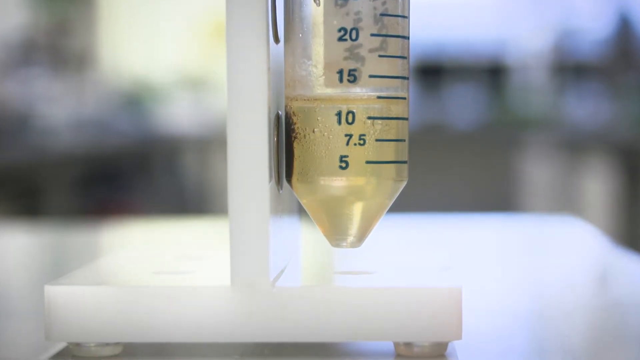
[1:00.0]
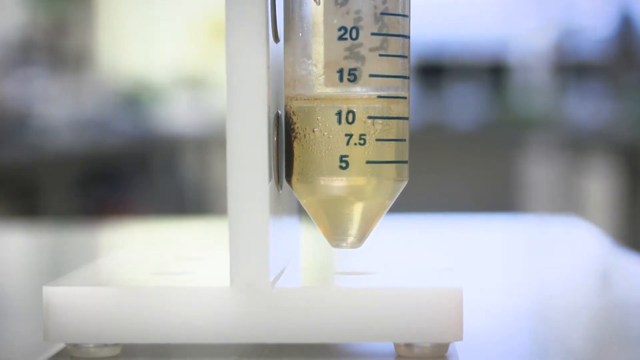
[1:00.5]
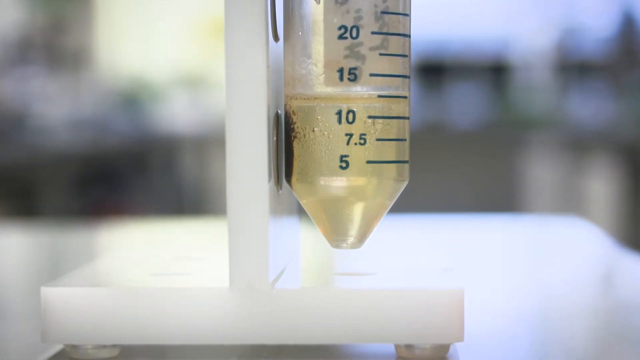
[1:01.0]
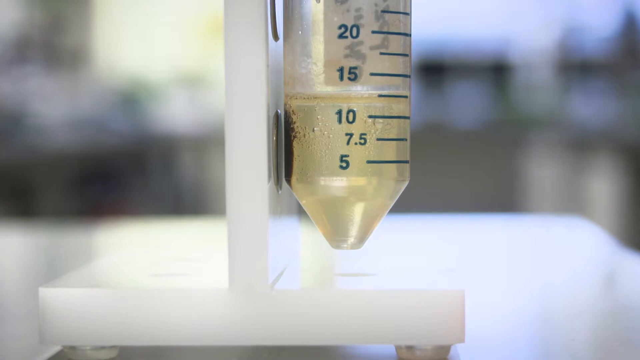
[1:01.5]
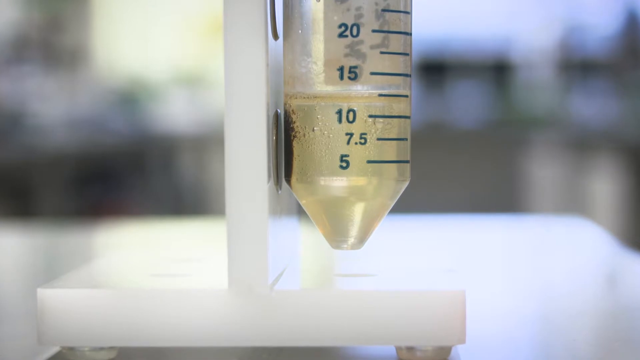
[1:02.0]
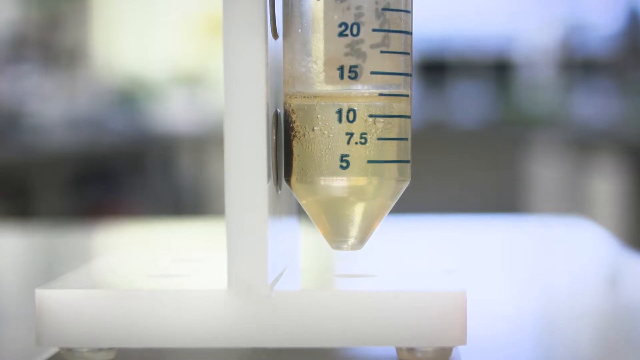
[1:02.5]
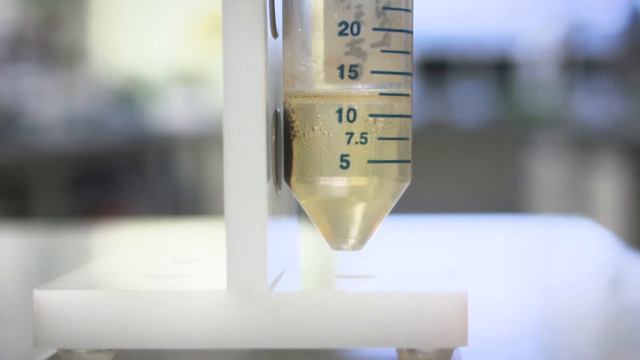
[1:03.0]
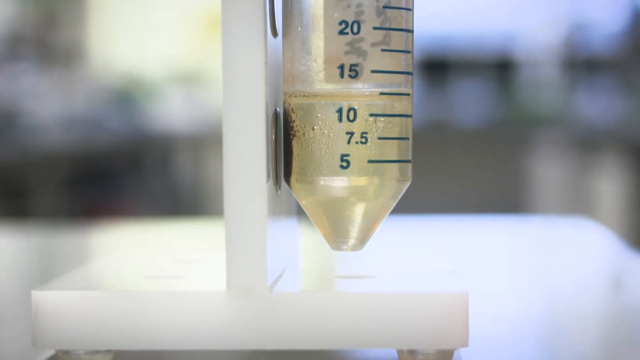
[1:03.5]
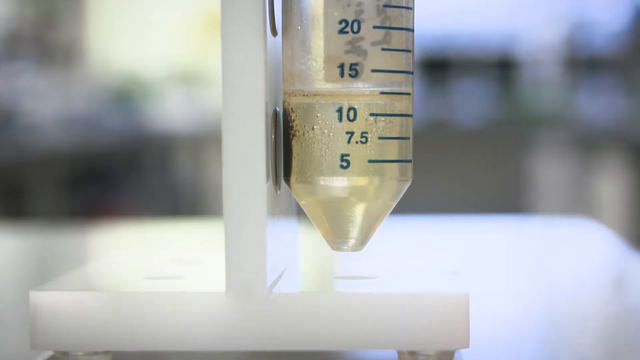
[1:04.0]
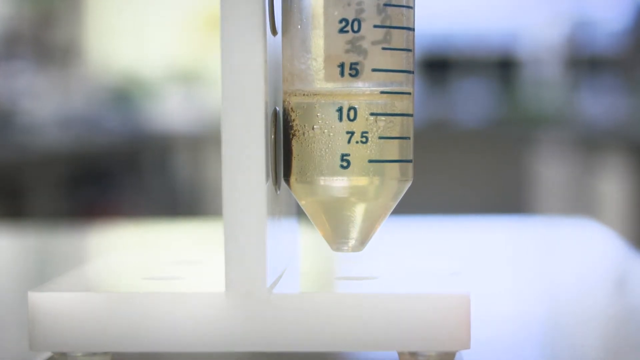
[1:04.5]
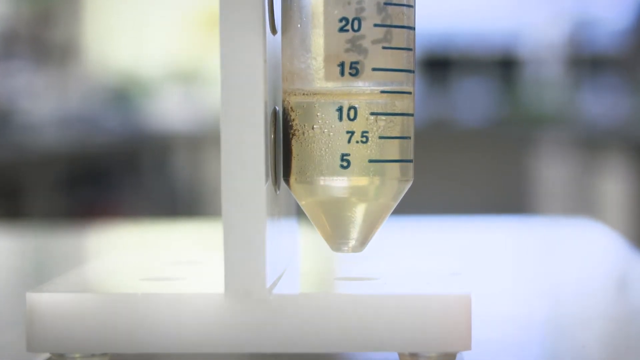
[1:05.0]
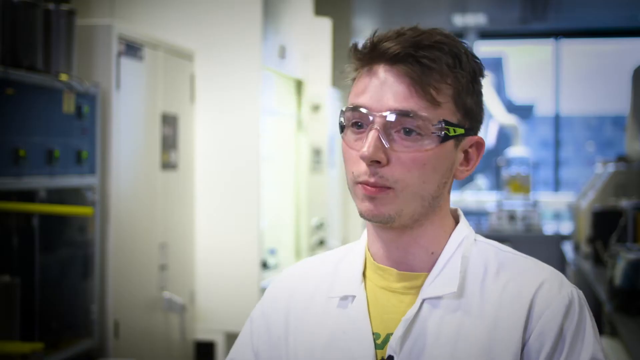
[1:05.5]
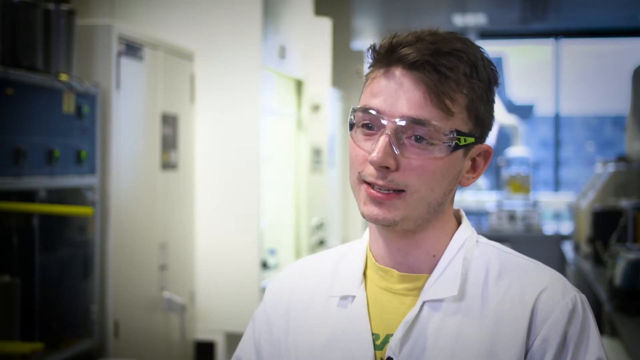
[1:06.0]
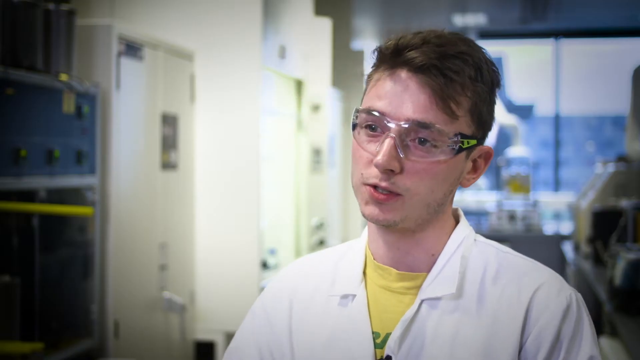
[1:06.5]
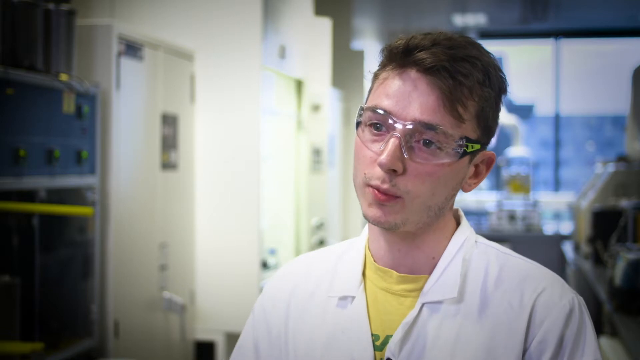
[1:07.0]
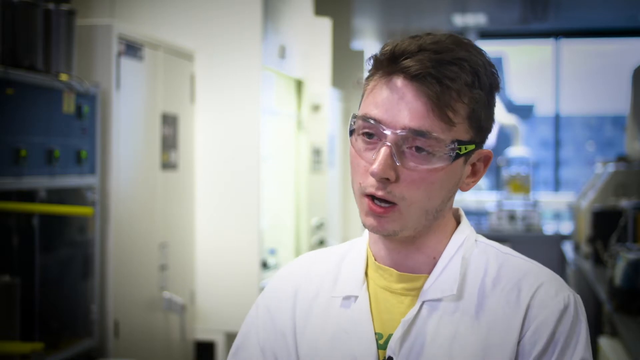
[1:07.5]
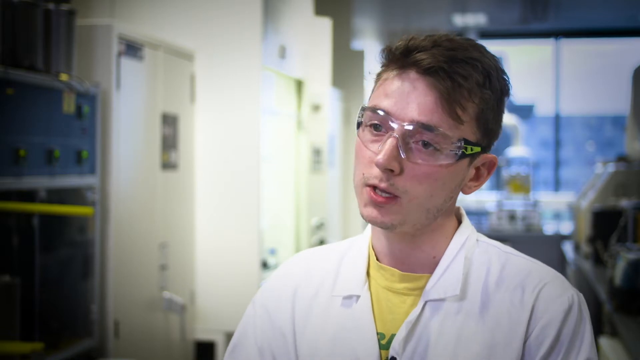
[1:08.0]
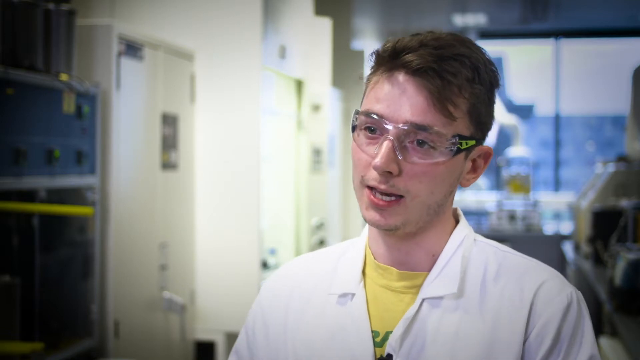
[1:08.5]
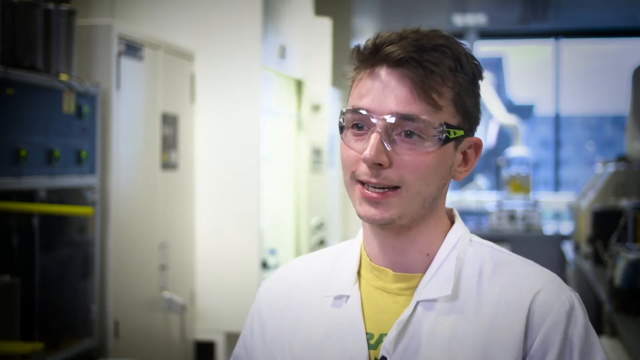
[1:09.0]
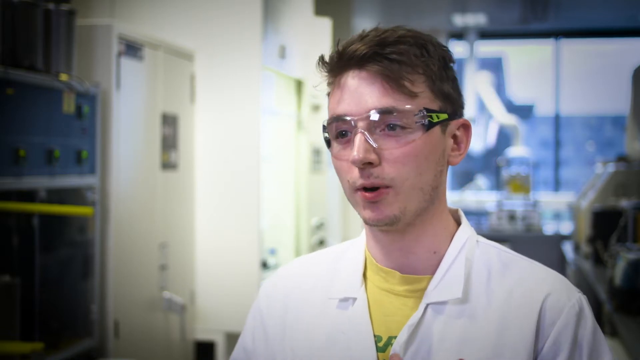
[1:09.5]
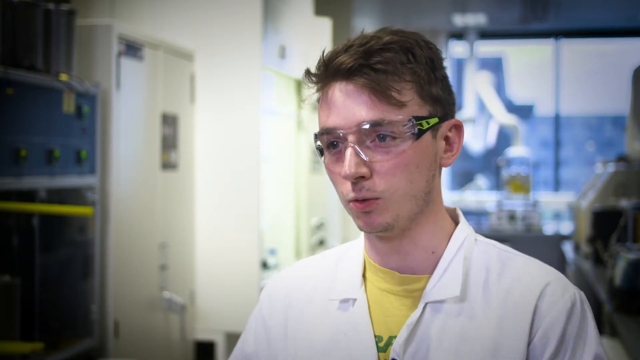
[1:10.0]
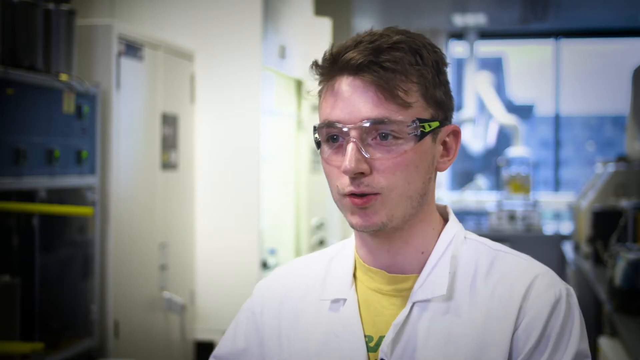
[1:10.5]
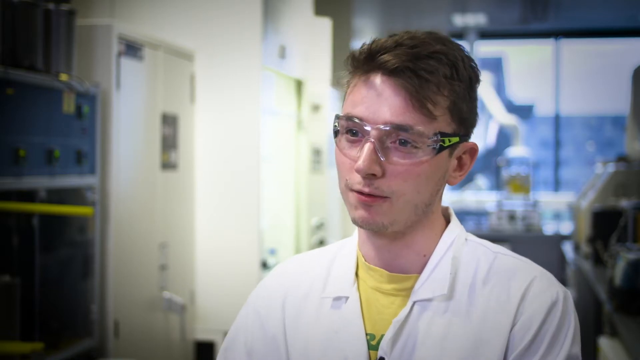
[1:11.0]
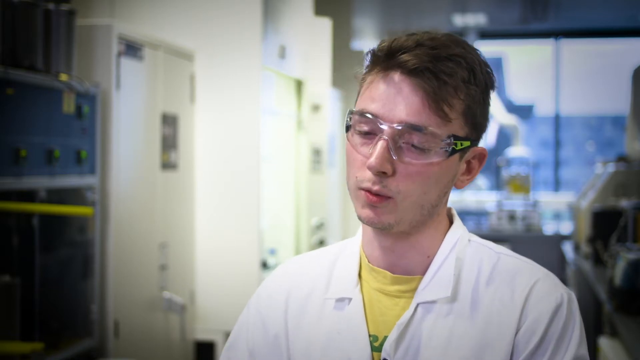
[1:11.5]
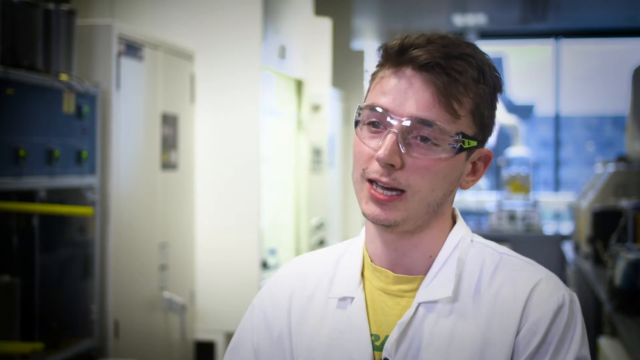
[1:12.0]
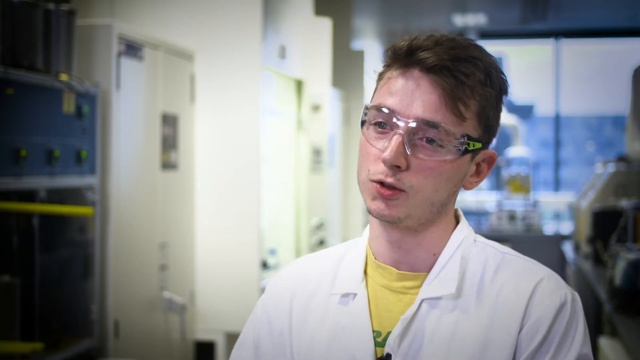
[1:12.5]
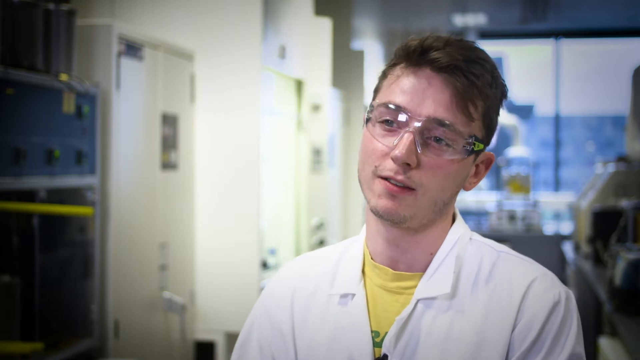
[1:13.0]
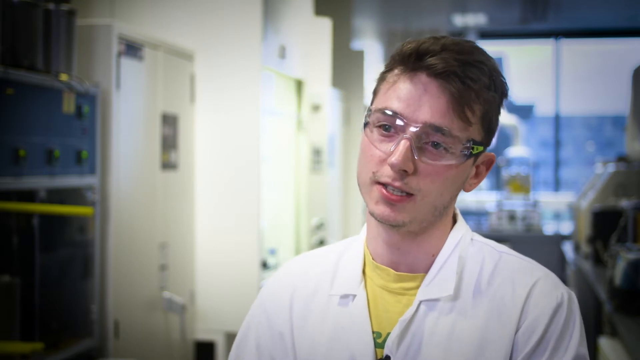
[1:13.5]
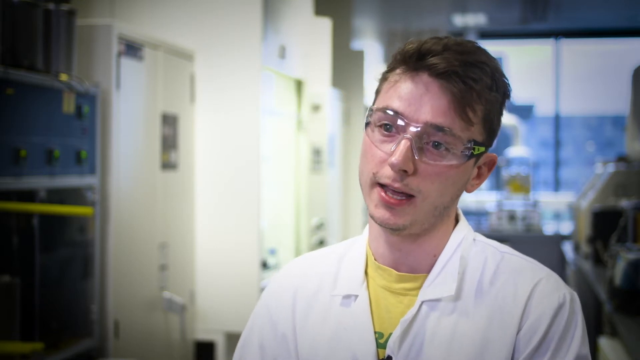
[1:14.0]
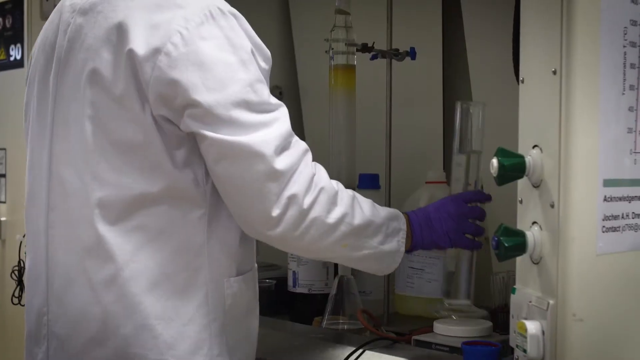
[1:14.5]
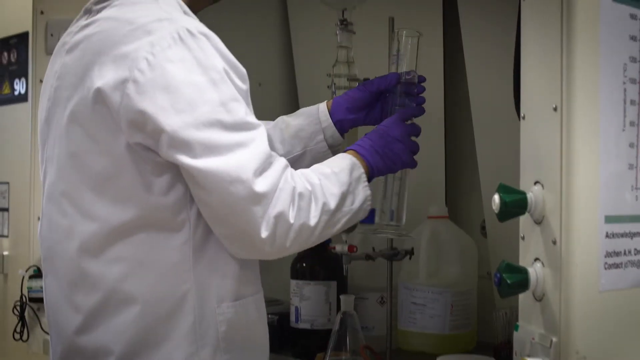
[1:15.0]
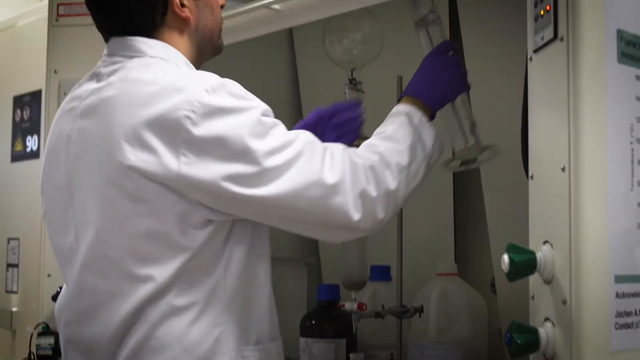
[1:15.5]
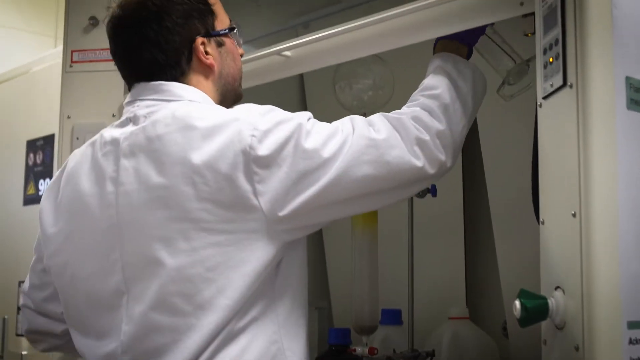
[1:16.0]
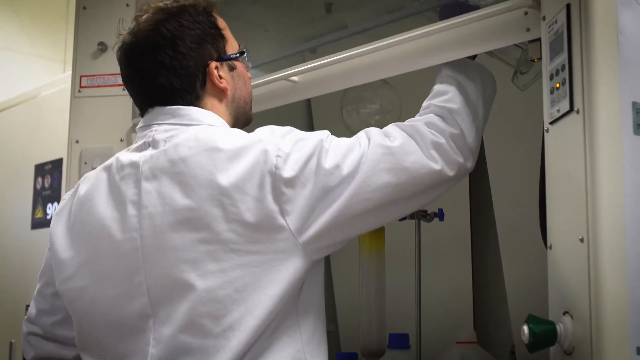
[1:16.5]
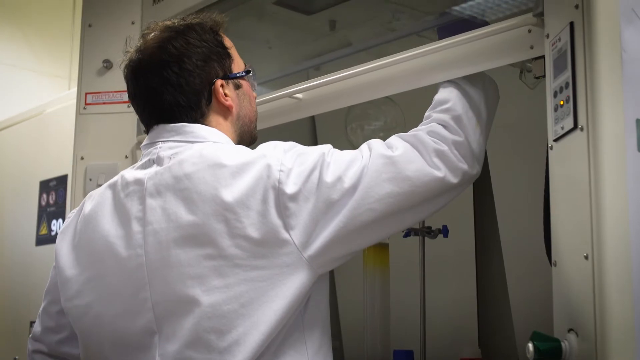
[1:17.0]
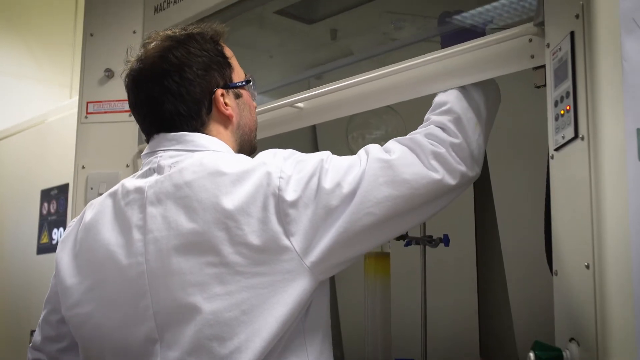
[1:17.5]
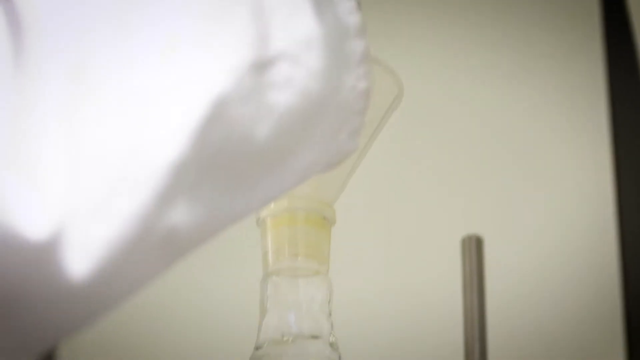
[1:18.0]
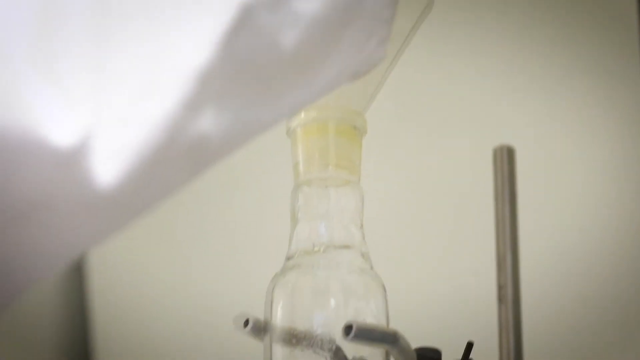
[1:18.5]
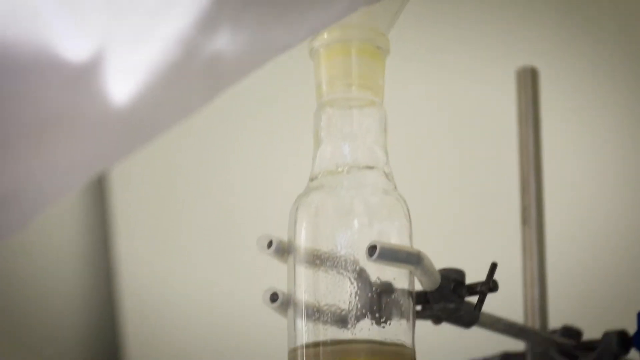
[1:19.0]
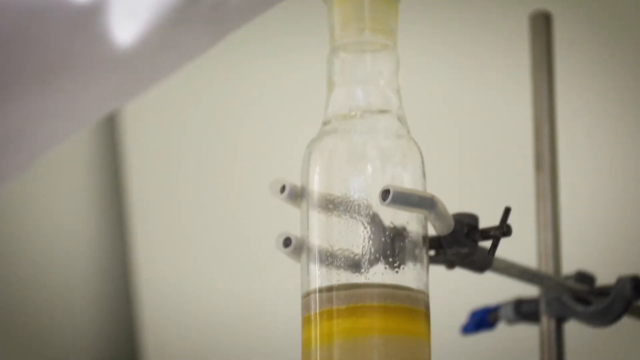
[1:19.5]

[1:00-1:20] A long, narrow beaker with measurements on it is shown. A PhD student in chemical engineering is interviewed, wearing a yellow t-shirt this time rather than the black one, with a lab coat over it, safety goggles, and brown hair. He speaks to somebody, with windows behind him, possibly about the other man's experiment. The other man pours the liquid into a larger container where he is working, in an enclosed area with three sides that is open at the front and has his lab work set up. He adds the yellow liquid to the top; he wears glasses and a lab coat.